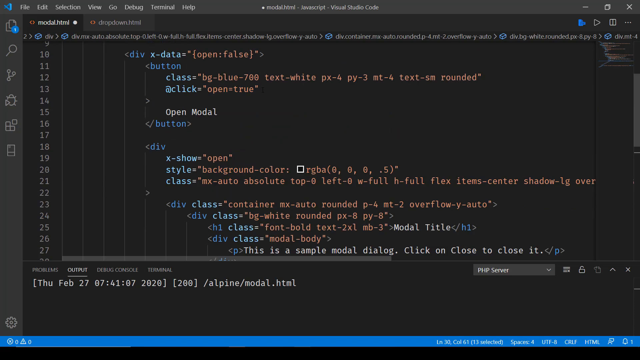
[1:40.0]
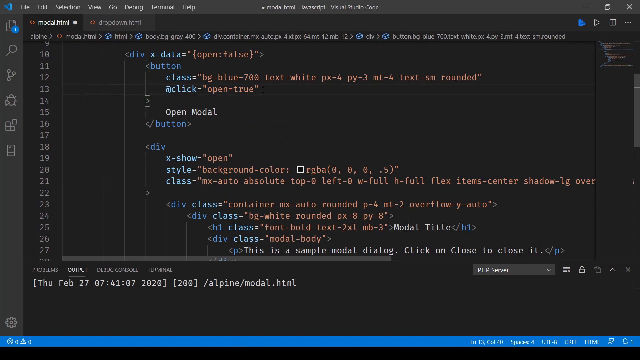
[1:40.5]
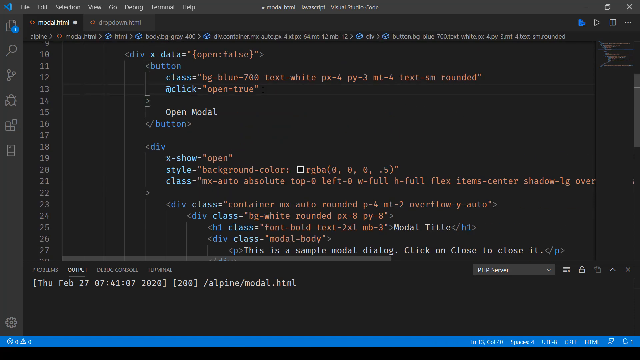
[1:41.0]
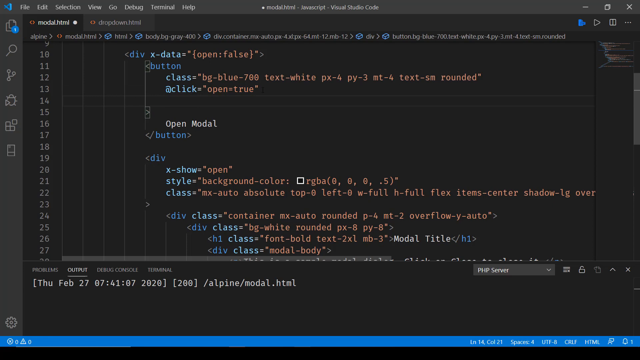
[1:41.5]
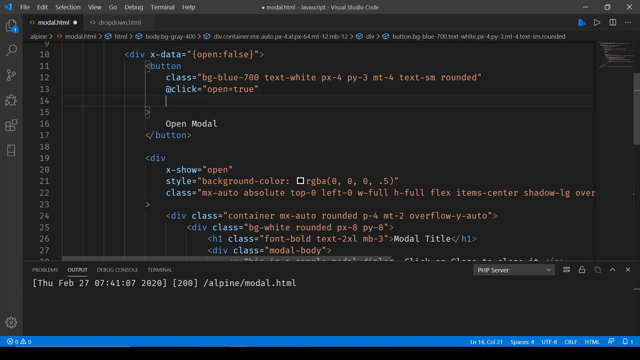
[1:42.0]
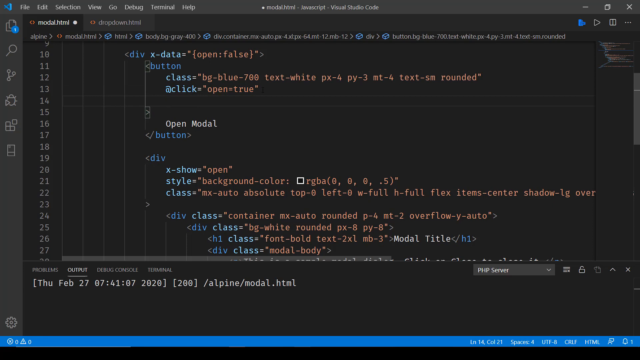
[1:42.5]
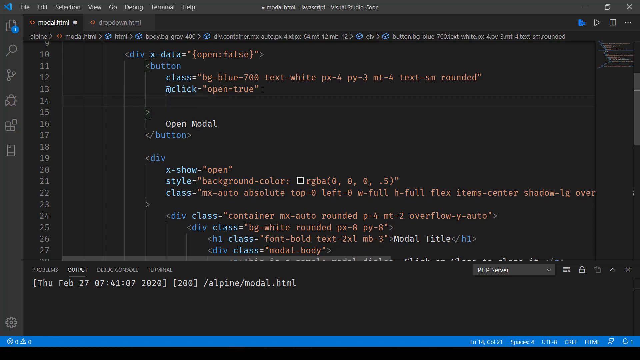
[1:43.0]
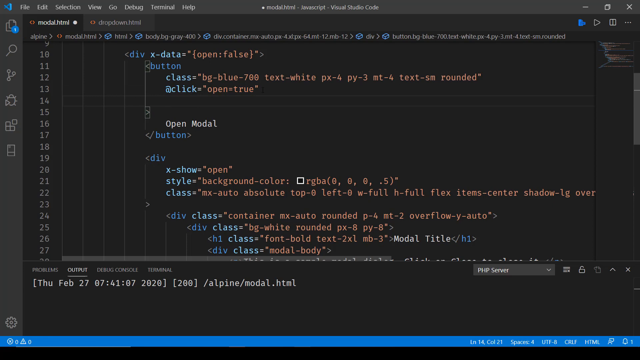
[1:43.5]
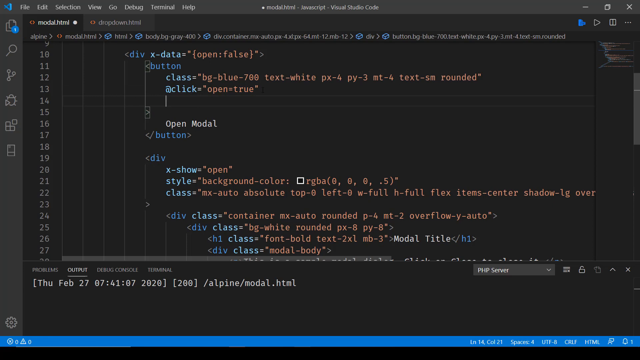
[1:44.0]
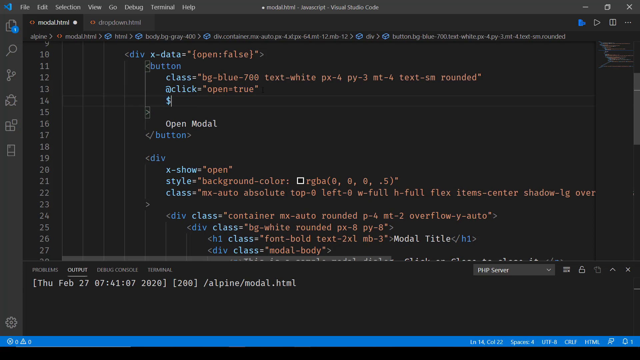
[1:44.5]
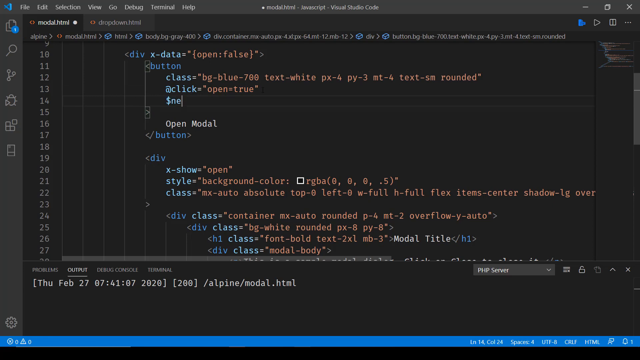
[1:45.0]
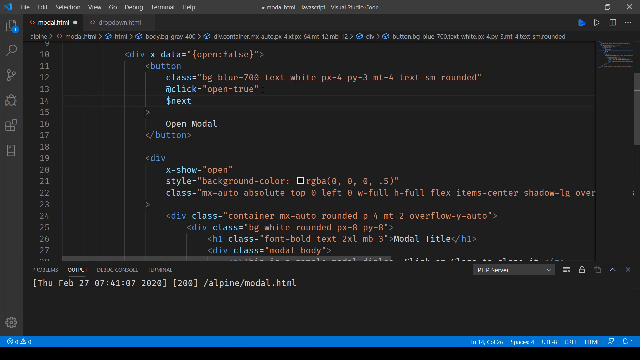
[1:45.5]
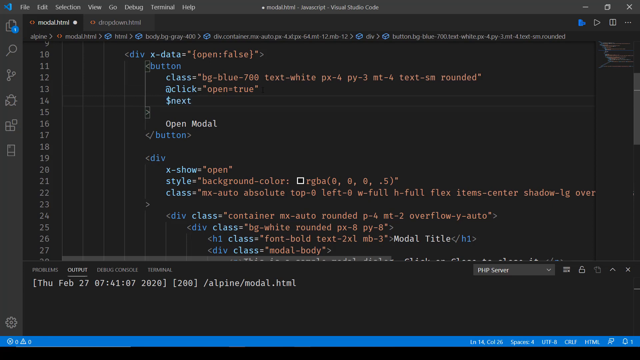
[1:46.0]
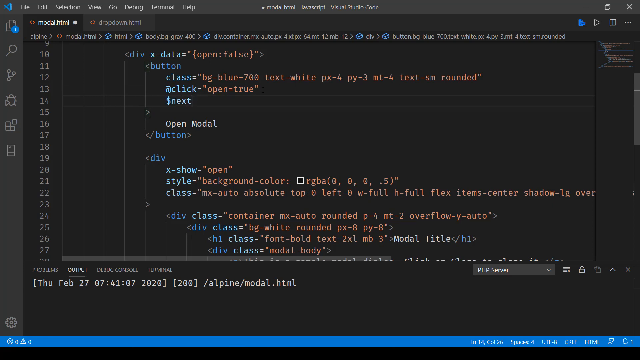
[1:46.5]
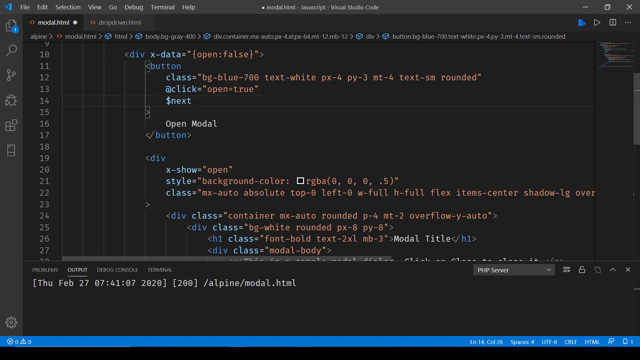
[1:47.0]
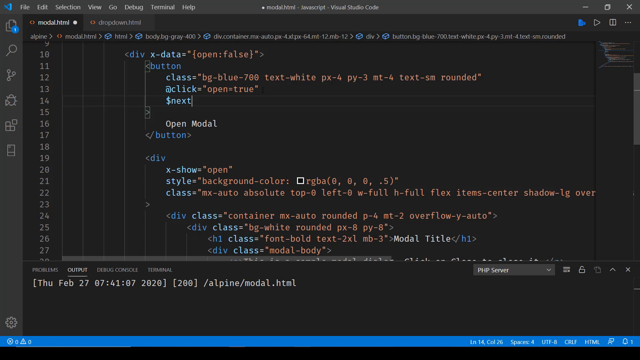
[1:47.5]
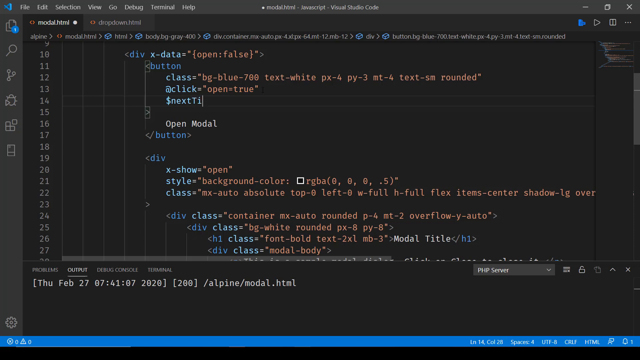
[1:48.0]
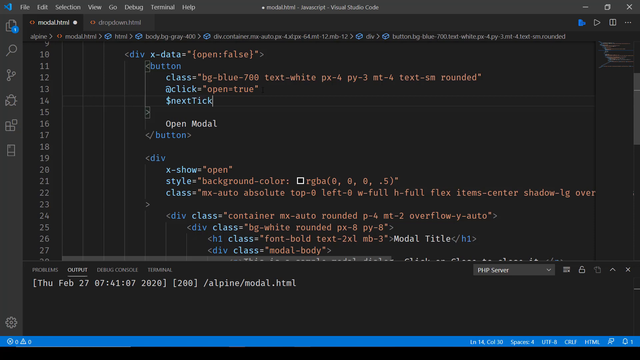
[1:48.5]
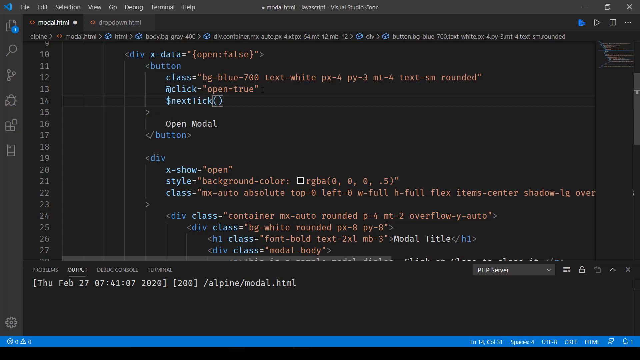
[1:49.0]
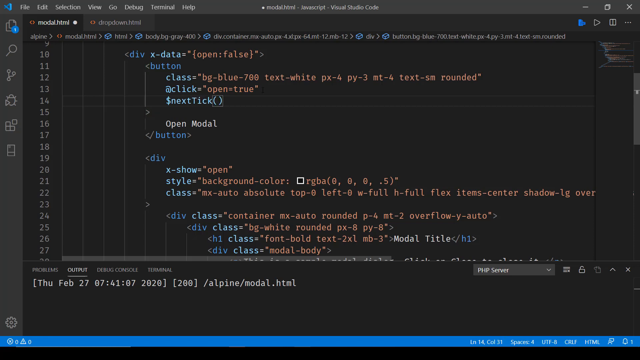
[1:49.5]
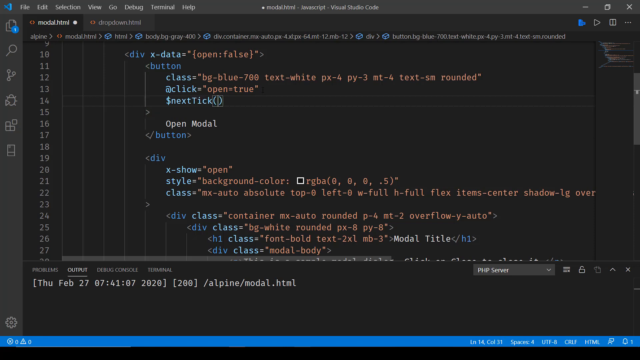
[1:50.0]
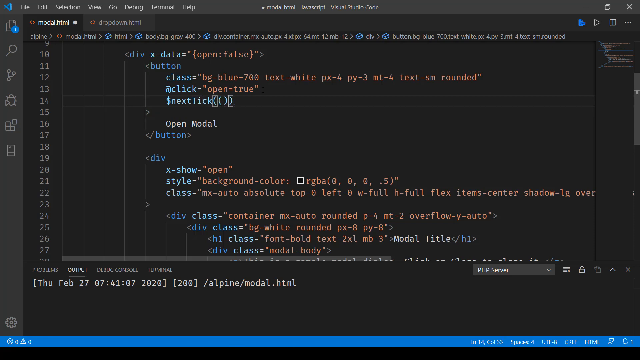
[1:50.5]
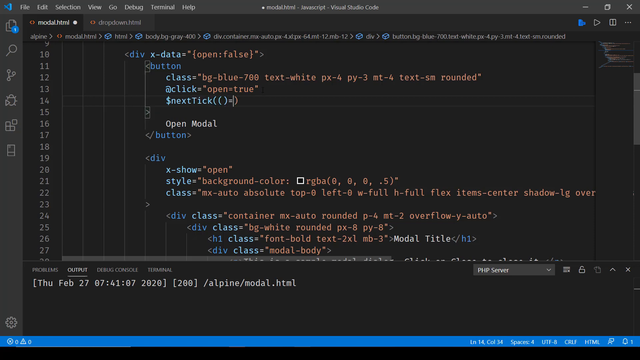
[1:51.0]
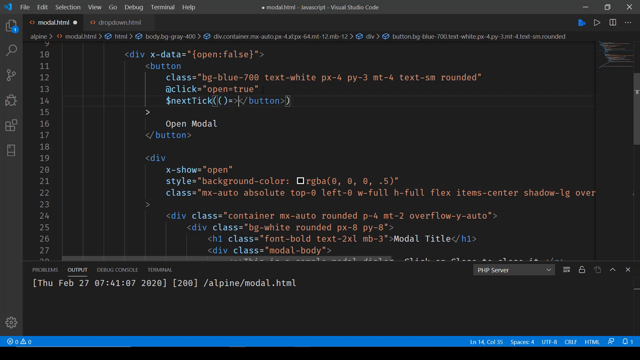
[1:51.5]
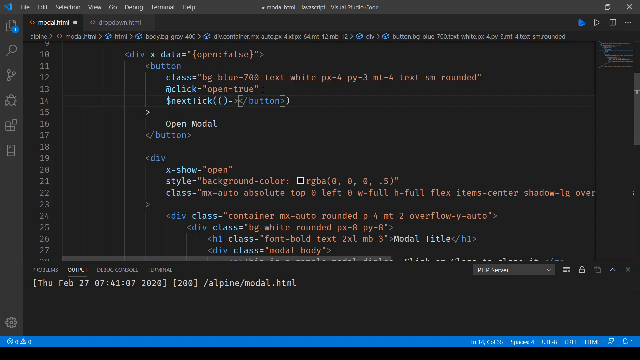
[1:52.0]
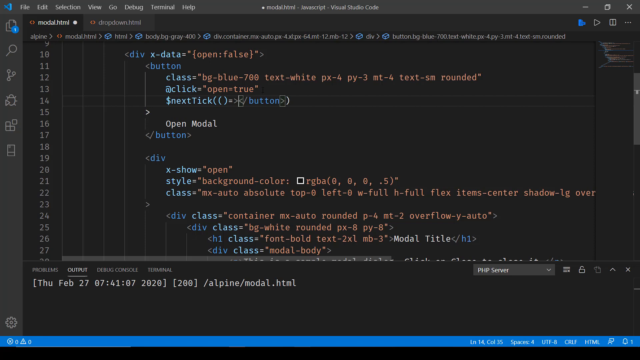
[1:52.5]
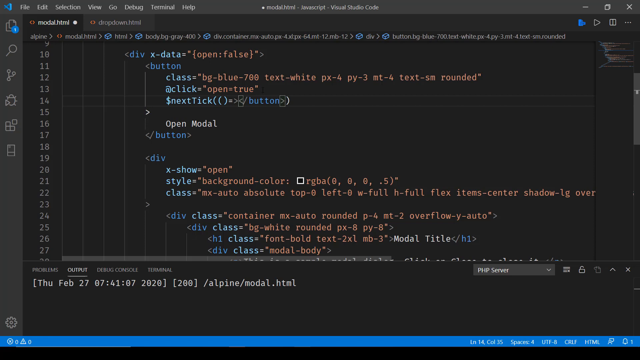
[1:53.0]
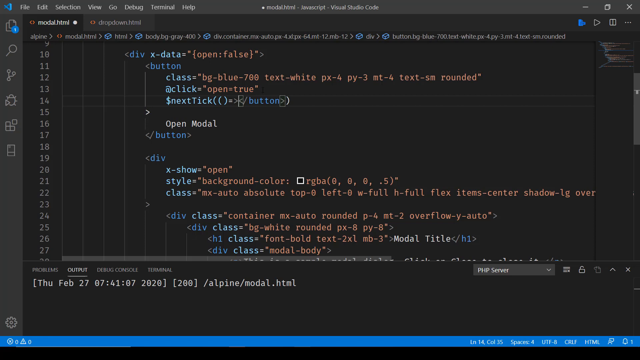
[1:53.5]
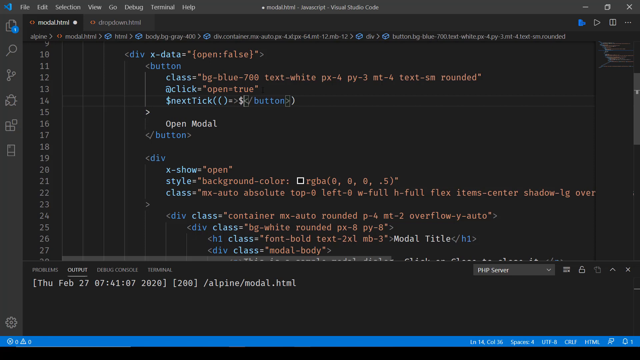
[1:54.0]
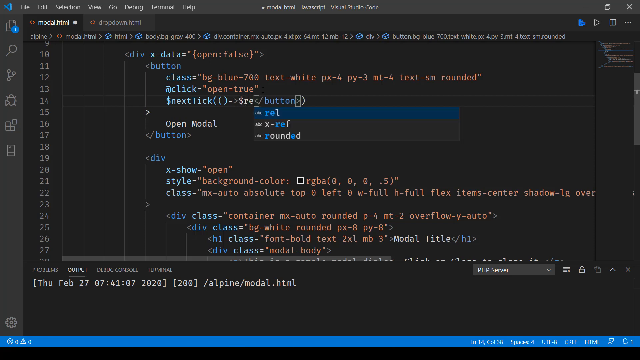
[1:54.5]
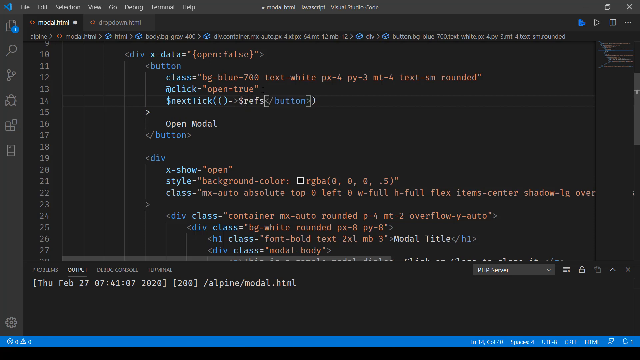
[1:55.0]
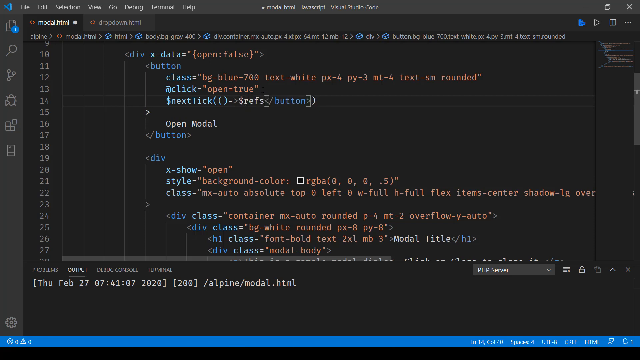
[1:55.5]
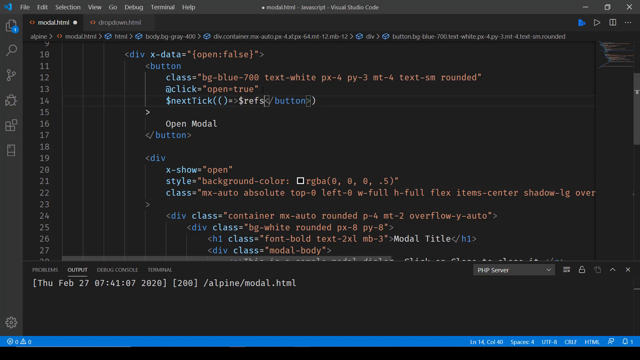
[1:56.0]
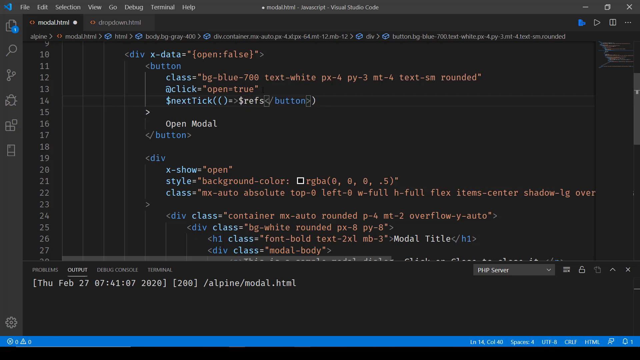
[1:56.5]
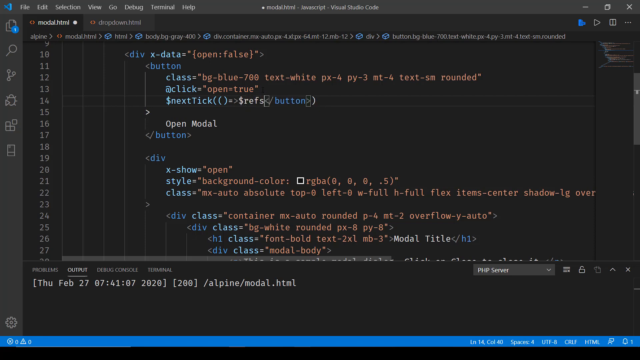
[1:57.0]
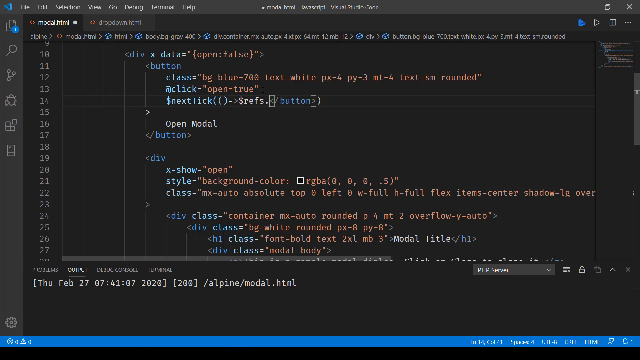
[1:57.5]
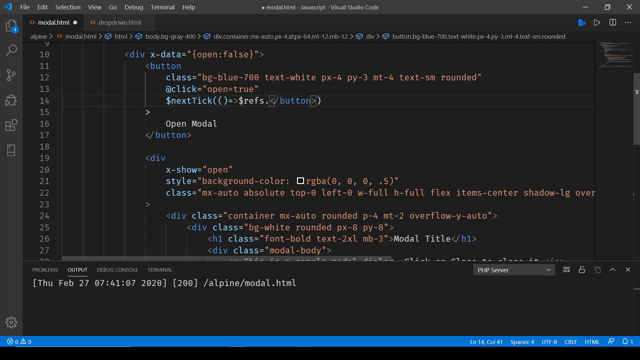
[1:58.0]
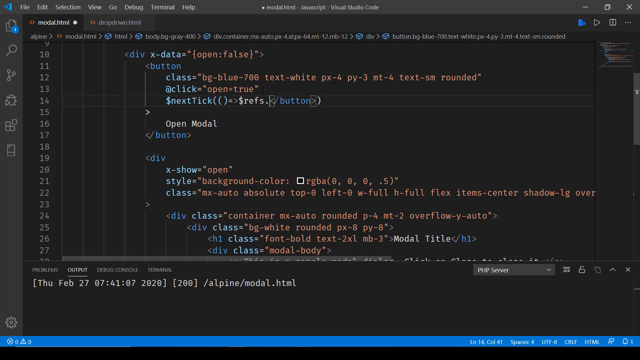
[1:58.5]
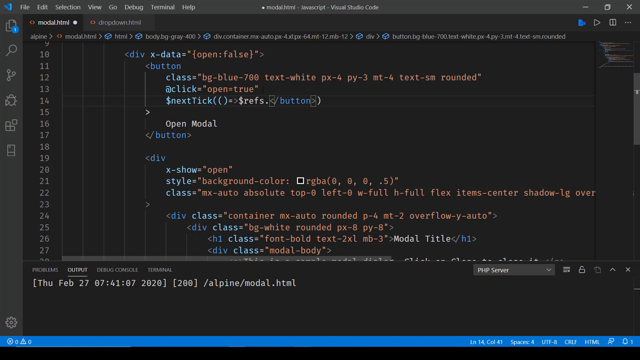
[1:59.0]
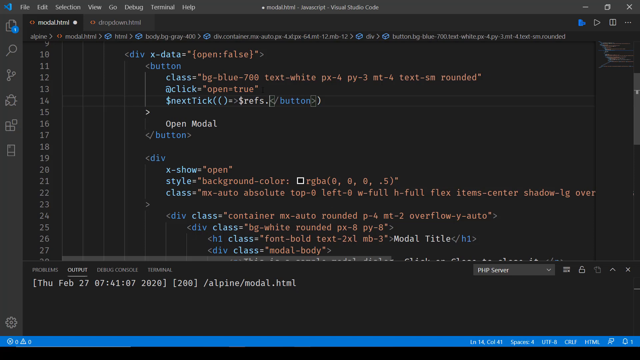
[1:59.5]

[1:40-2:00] Another addition is made to the code, this time a next tick, and it looks like a button is being added using a reference command in the HTML. Earlier in the code is the open modal button. The address is still localhost.